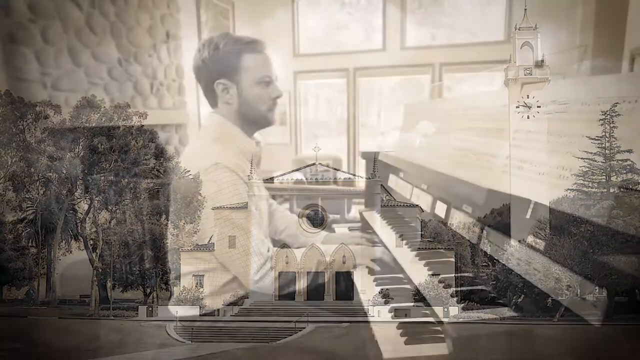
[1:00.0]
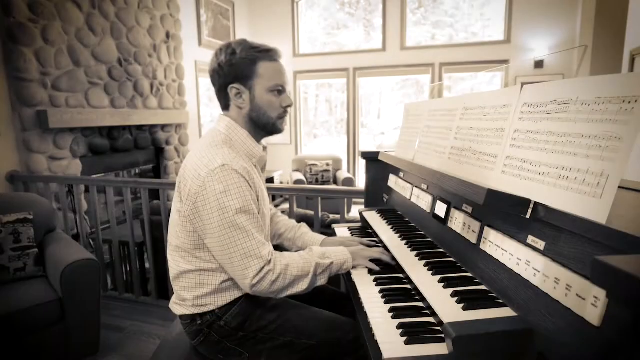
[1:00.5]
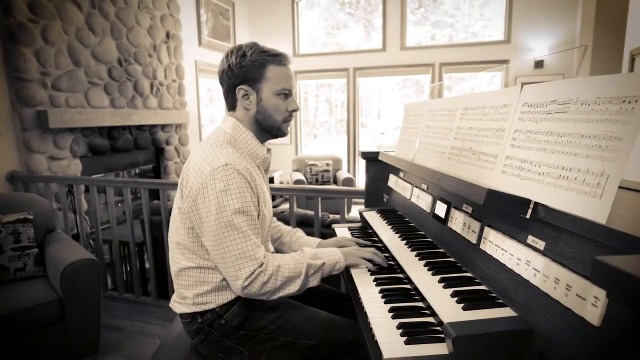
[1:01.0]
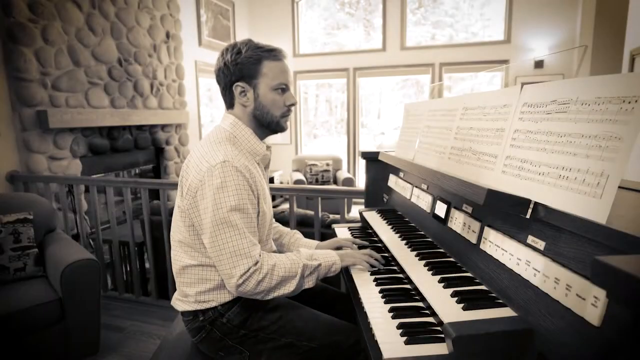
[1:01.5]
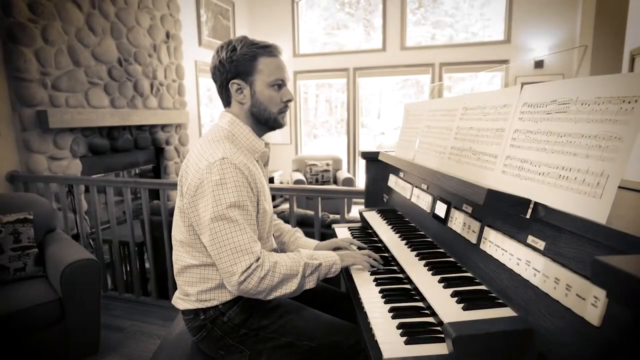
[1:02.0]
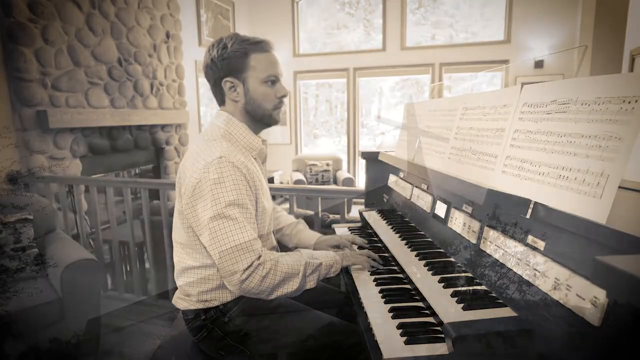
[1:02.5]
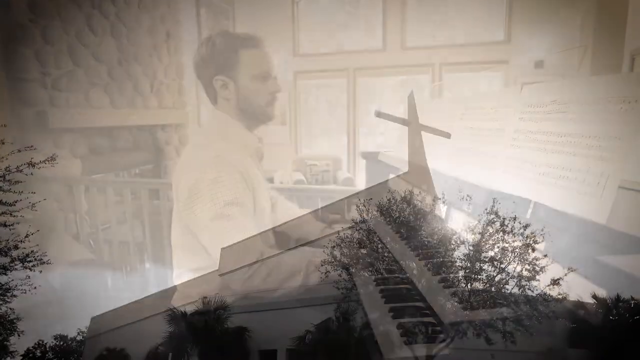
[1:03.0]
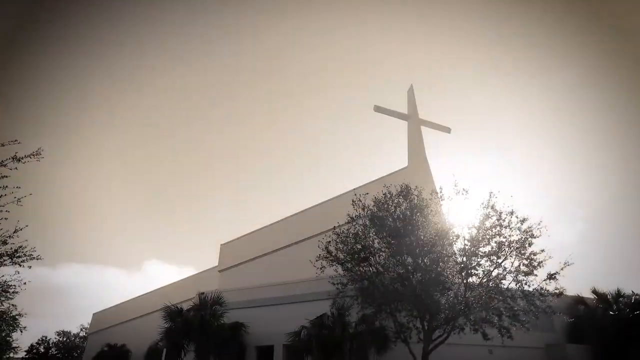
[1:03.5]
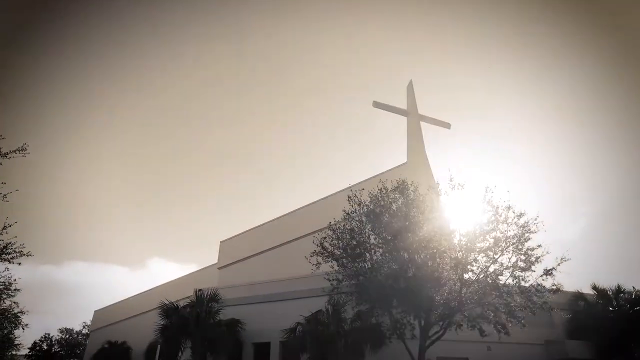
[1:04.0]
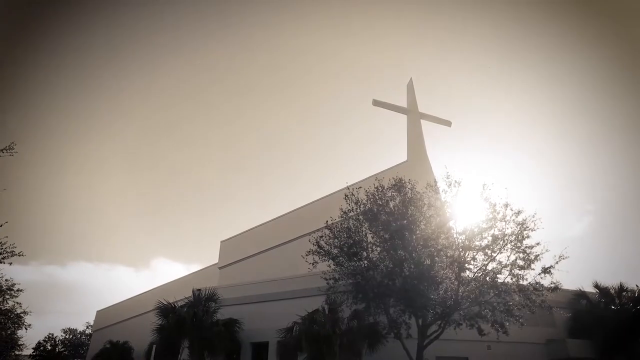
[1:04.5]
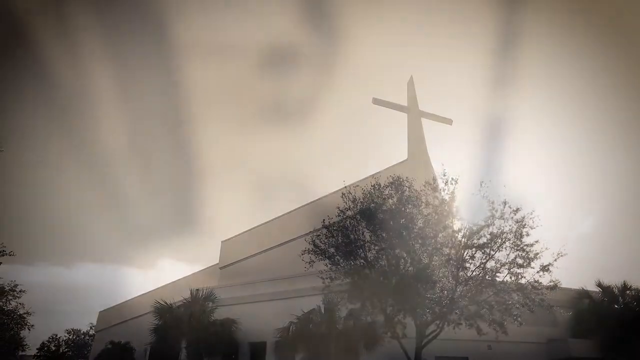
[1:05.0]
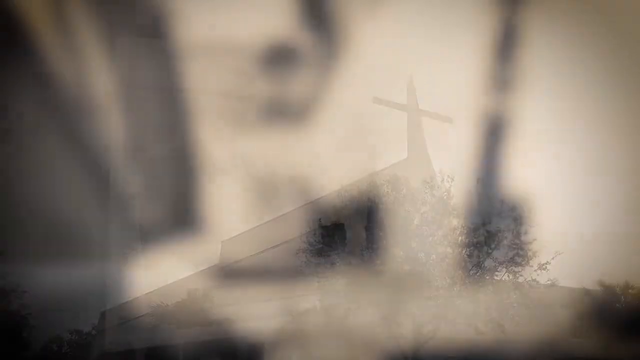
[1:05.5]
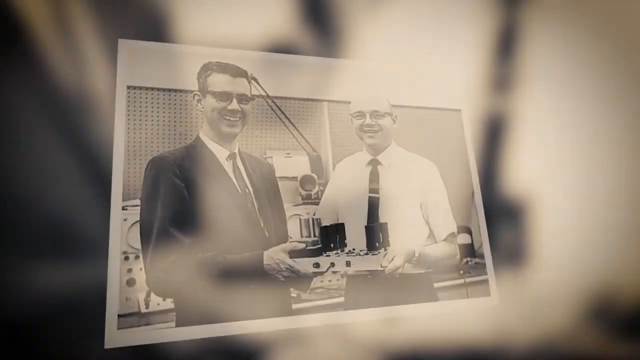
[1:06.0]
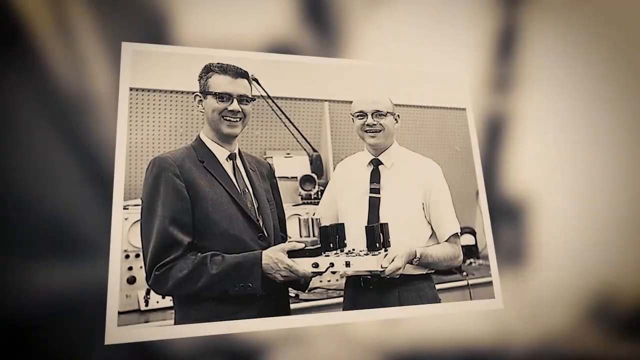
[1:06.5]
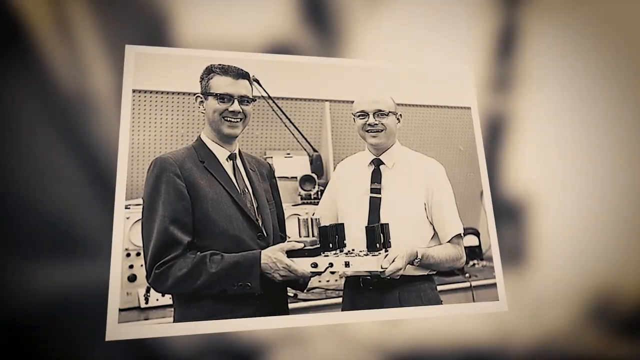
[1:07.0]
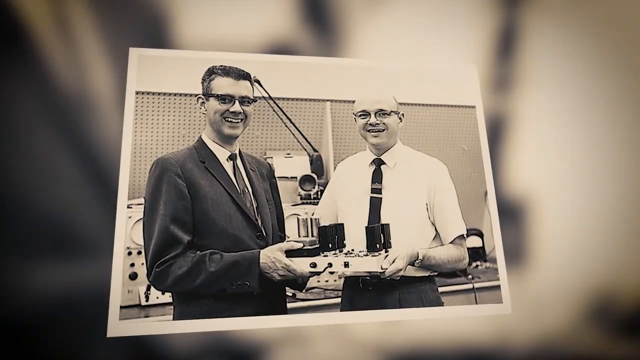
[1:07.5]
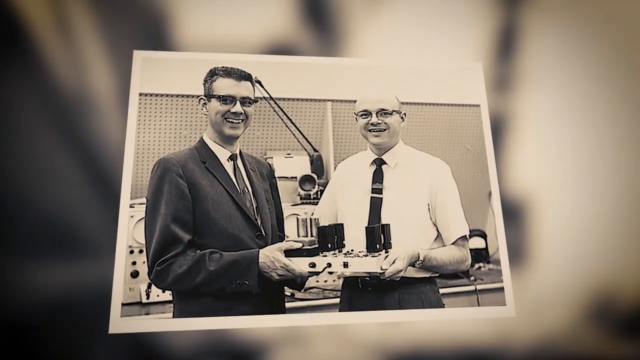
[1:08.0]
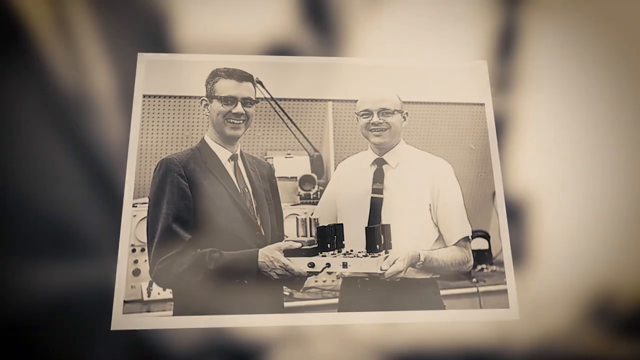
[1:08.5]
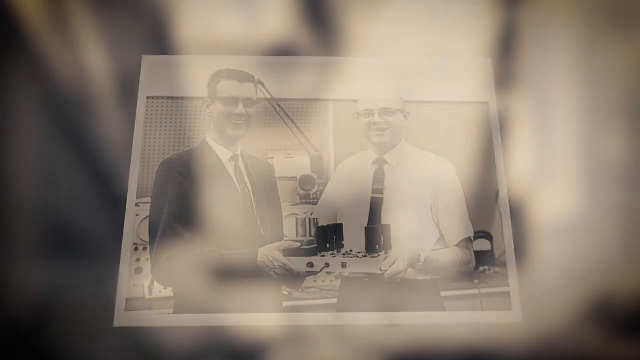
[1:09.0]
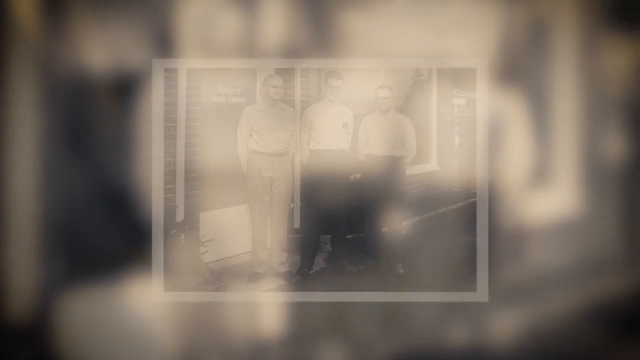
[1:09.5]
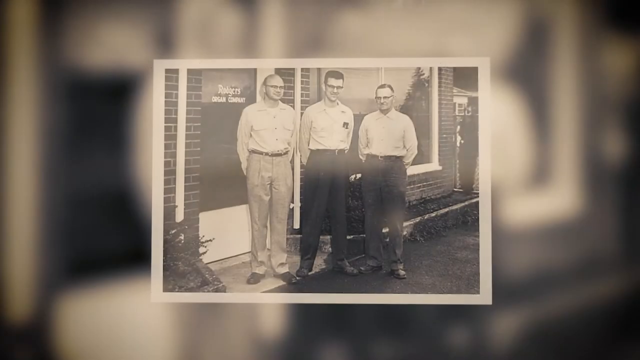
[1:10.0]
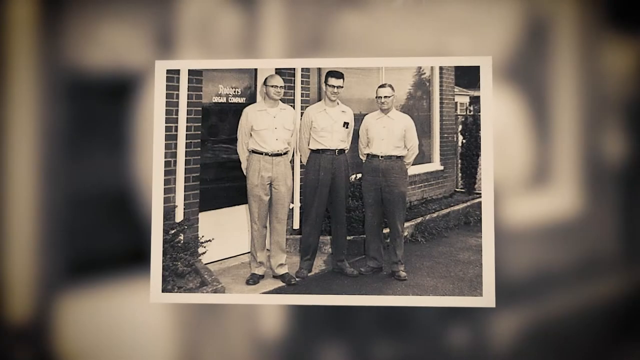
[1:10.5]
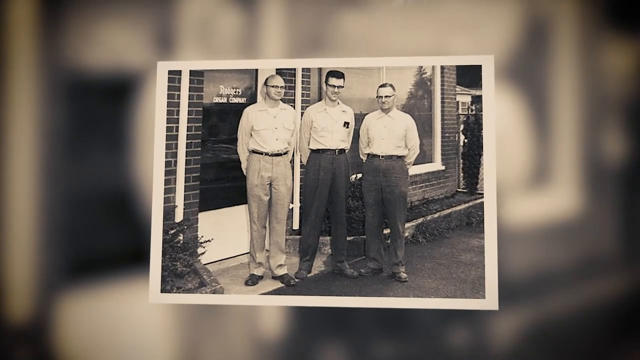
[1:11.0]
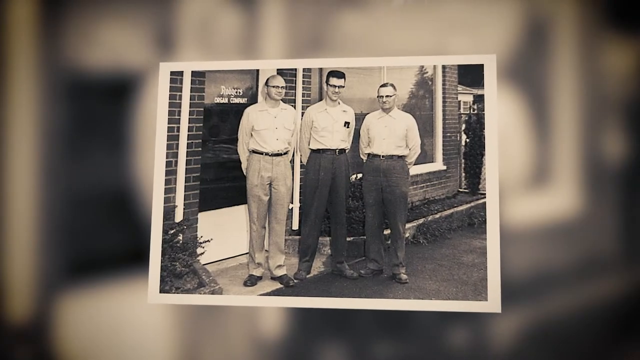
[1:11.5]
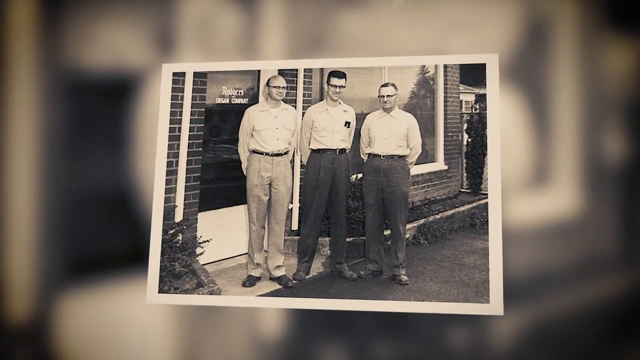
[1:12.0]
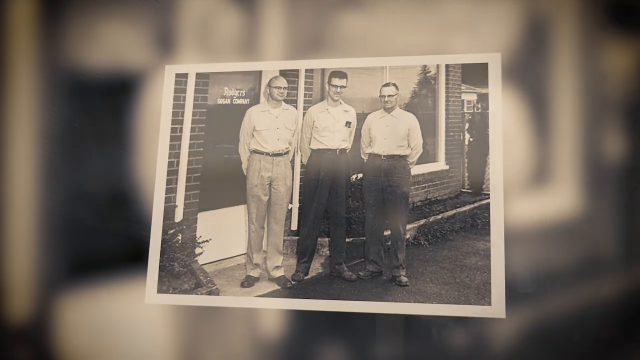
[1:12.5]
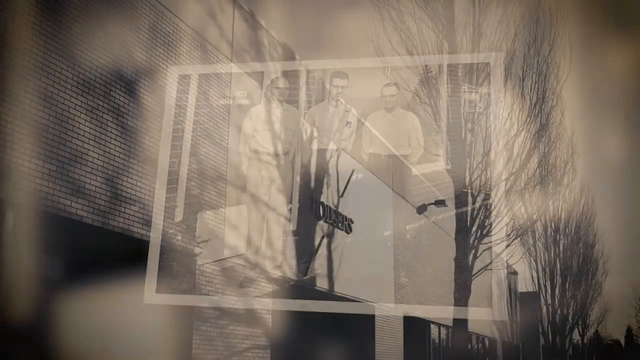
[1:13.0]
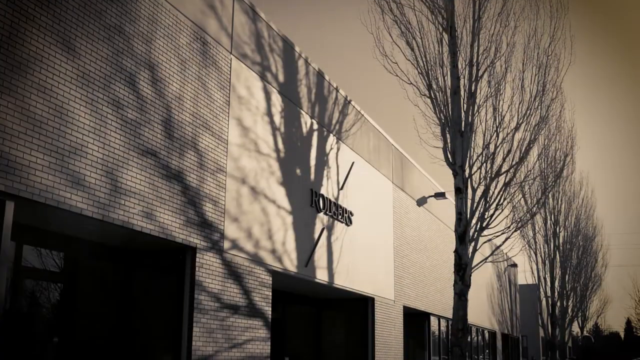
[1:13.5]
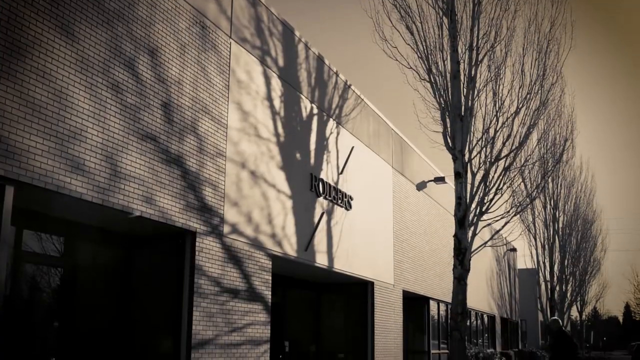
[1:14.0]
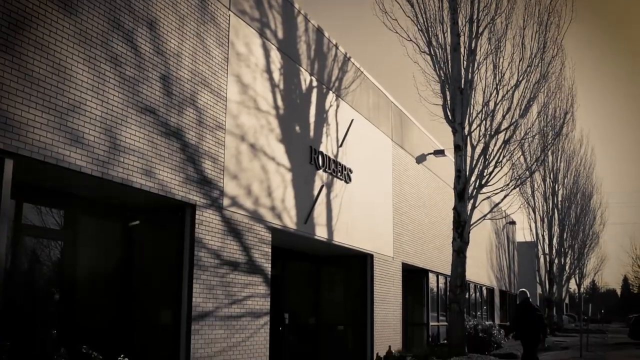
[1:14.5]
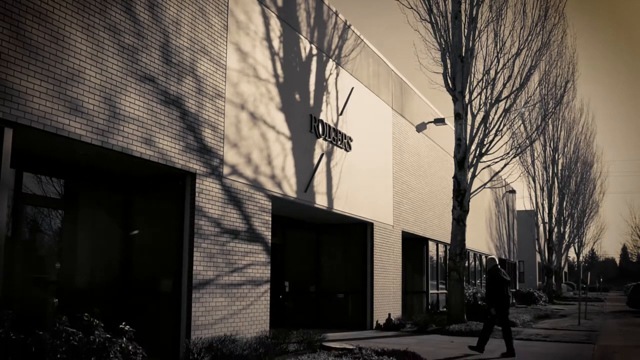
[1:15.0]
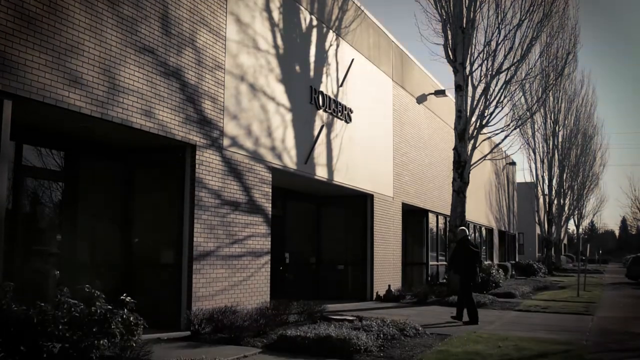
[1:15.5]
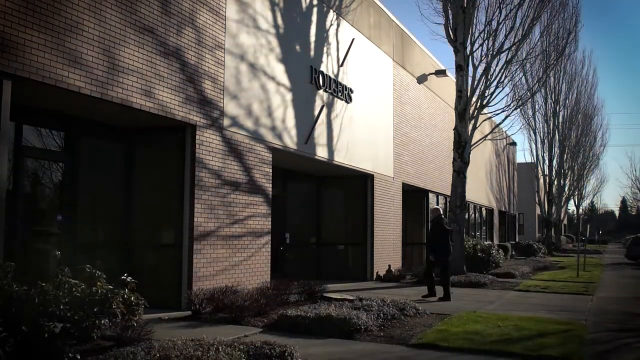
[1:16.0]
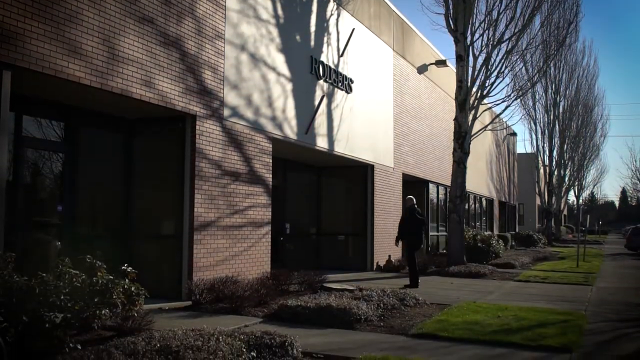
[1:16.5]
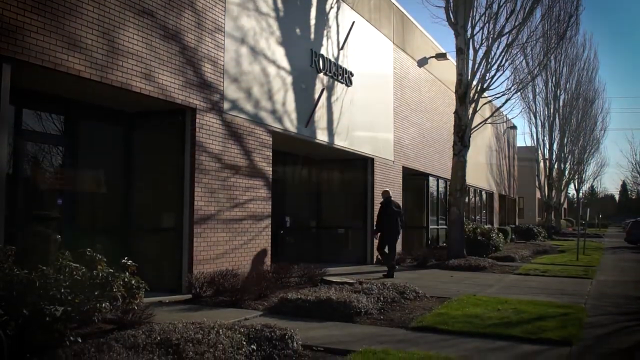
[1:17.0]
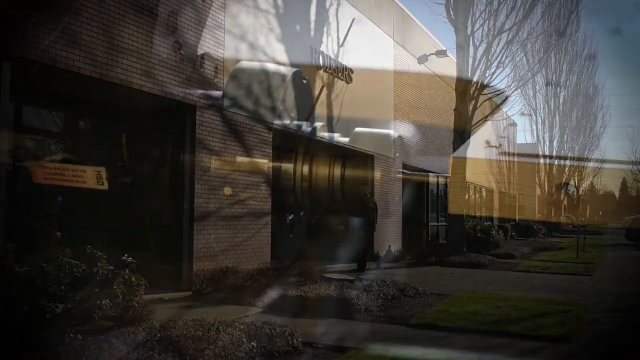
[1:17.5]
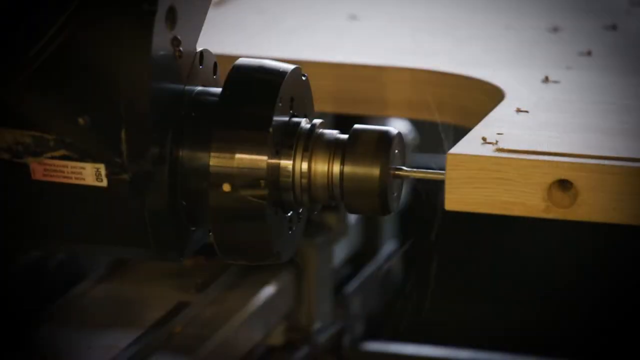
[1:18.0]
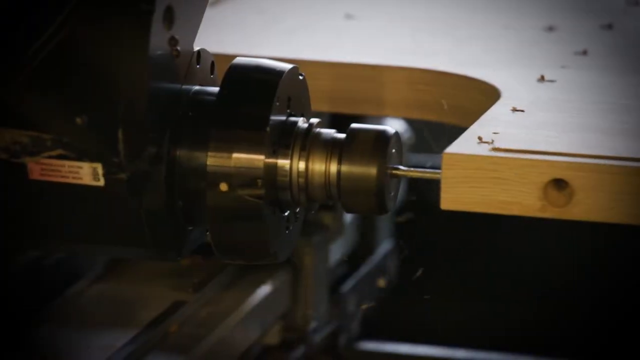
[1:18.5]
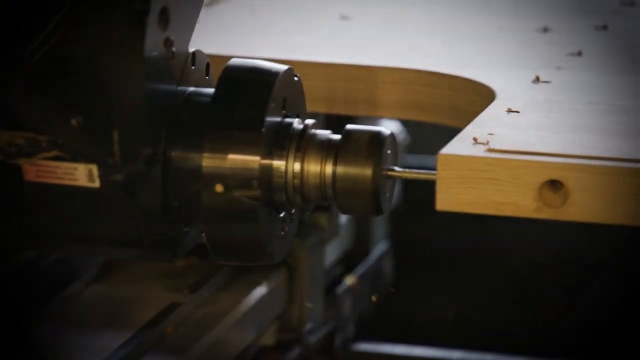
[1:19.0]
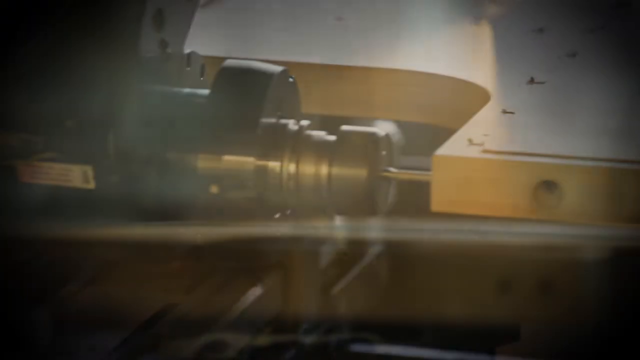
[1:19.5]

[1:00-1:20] A sepia-toned image of a Spanish-style white church fades out in the background, with the image of an organist superimposed above it. He sits facing right, playing the organ with both hands on the lower set of keys. He has a beard and short hair and wears a white check shirt. The image changes to a church seen looking up at it; it has more modern lines, and at the front is a very tall cross against the sky. Next is a black-and-white photograph of two men. The man on the right wears a short-sleeved white shirt, is balding, and has glasses. The man on the left wears a dark suit and tie and has short-cropped dark hair and glasses as well. Between them they hold some sort of scientific instrument, and both are smiling. The image then changes to three men wearing suit pants and long-sleeved shirts with no ties, all three with glasses, standing in front of a brick building with a large plate glass window. To the left of it is a glass door with the word "Rodgers" on it. Next is the front of the Rodgers building, a low two-story building made of cement and brick in the front, with bare trees and a man walking into the building. Then a machine drills a hole into a piece of wood.